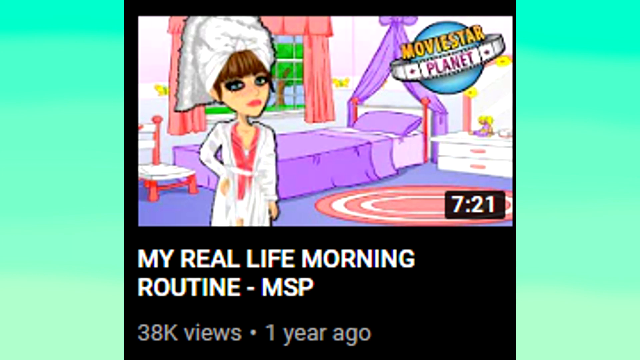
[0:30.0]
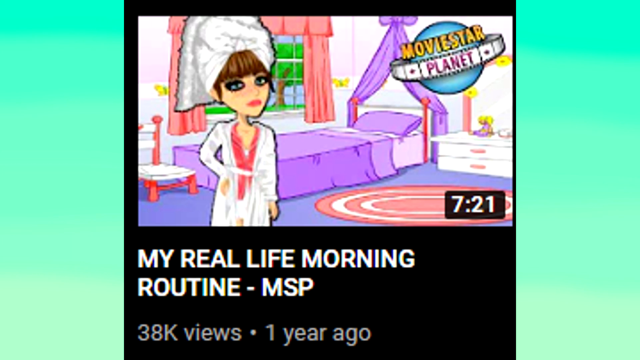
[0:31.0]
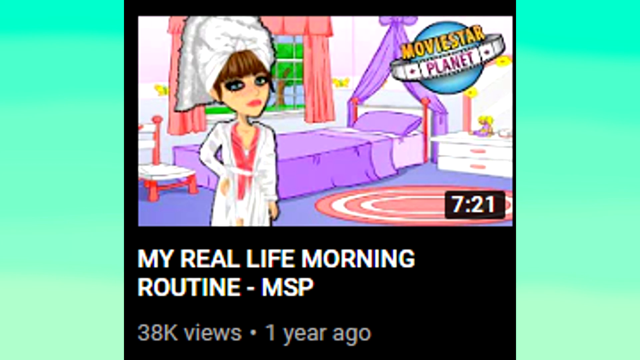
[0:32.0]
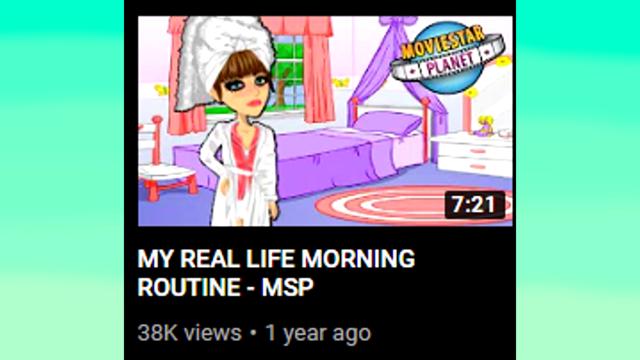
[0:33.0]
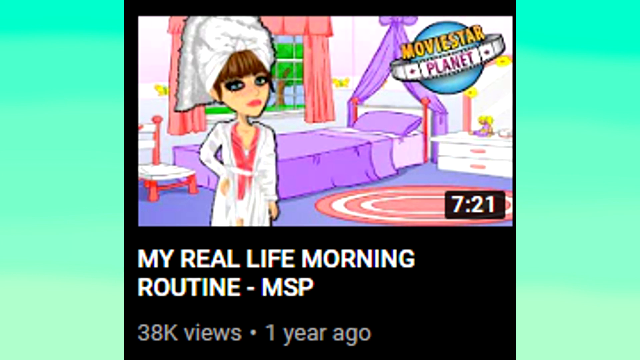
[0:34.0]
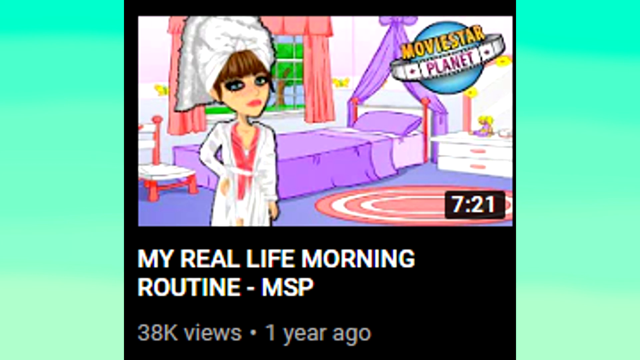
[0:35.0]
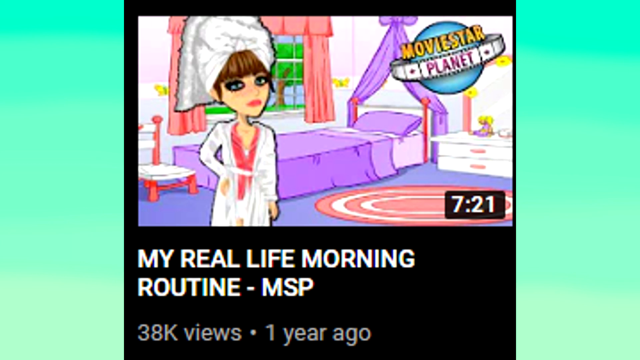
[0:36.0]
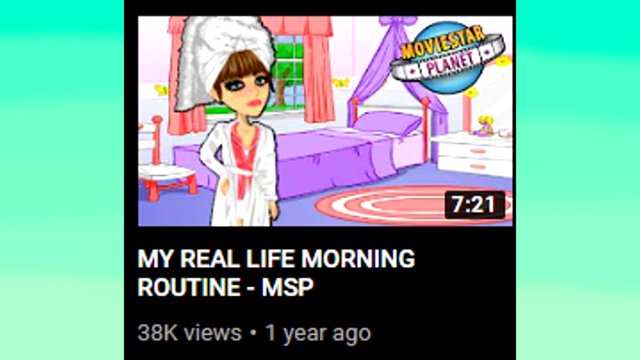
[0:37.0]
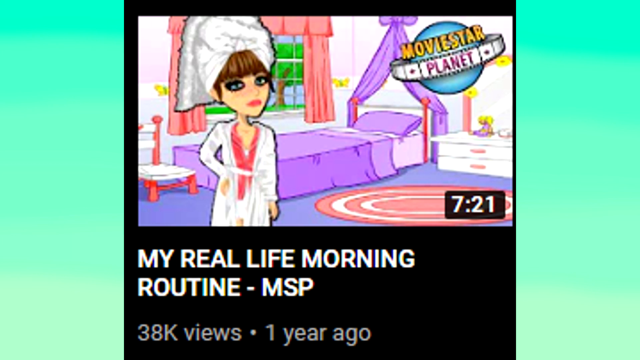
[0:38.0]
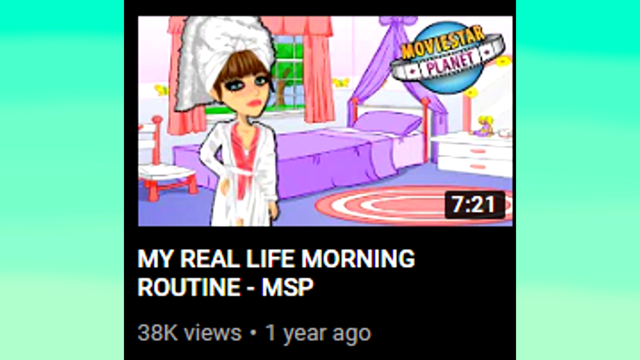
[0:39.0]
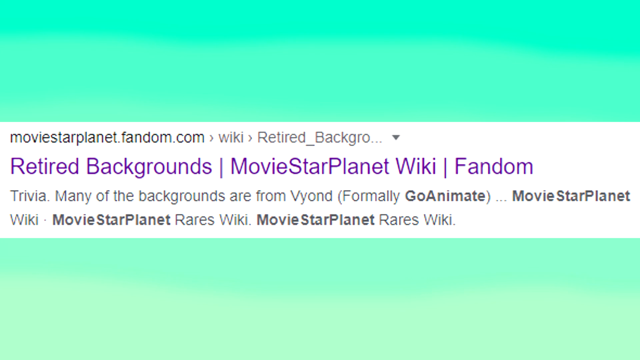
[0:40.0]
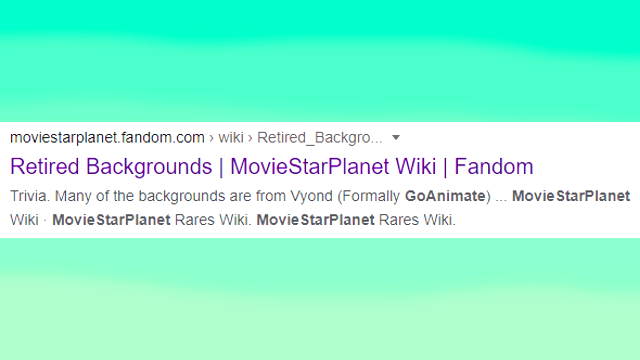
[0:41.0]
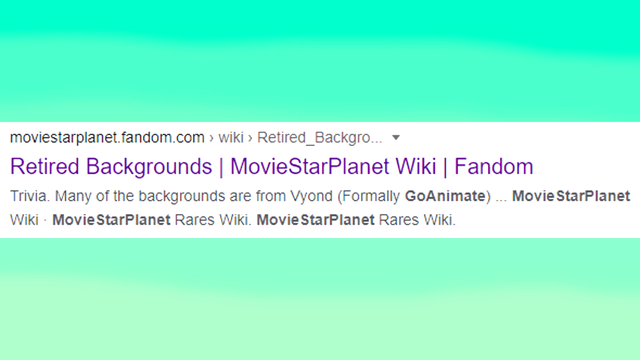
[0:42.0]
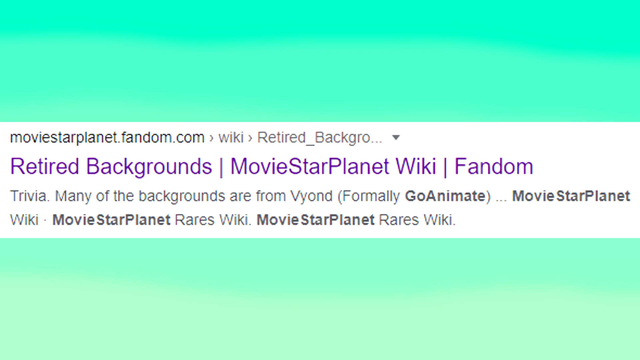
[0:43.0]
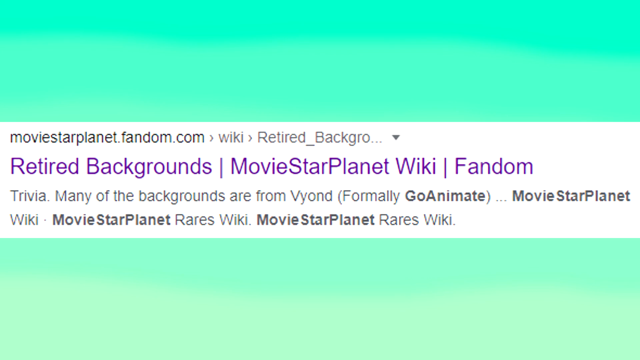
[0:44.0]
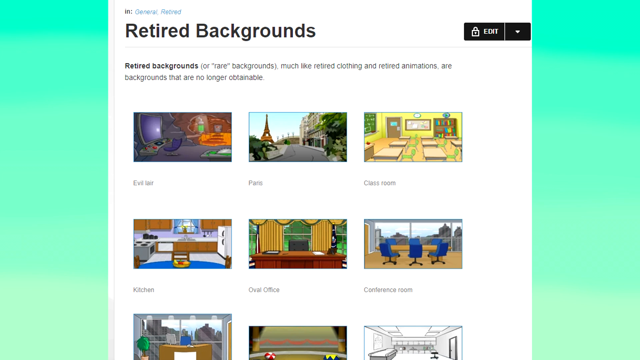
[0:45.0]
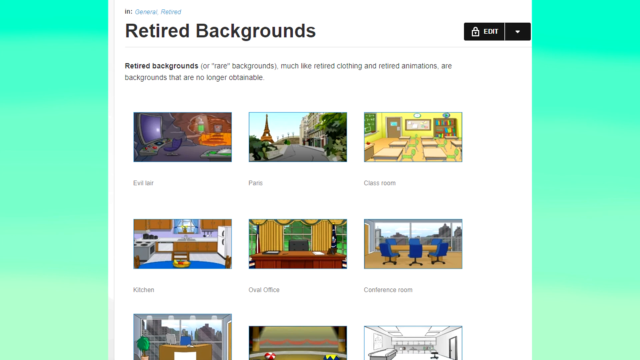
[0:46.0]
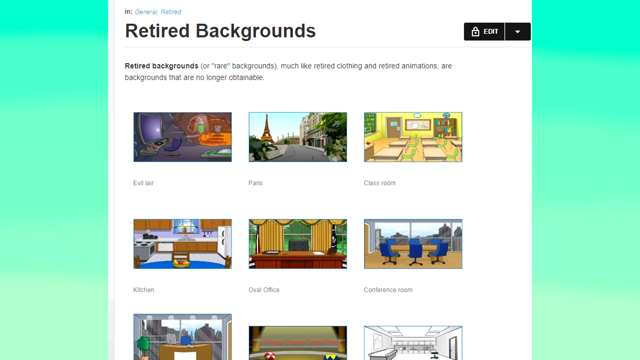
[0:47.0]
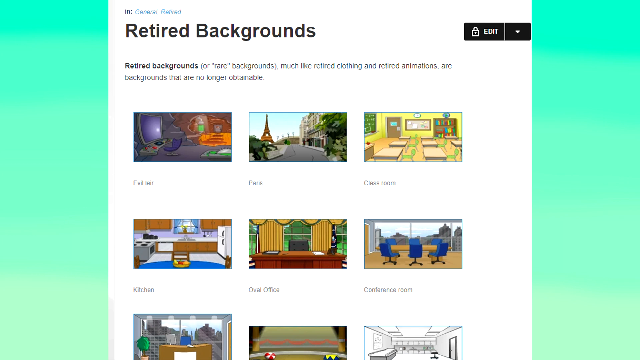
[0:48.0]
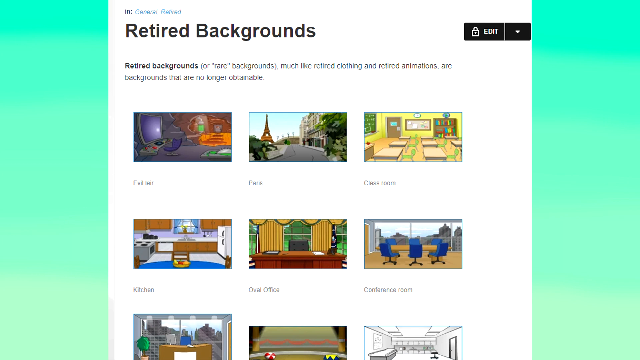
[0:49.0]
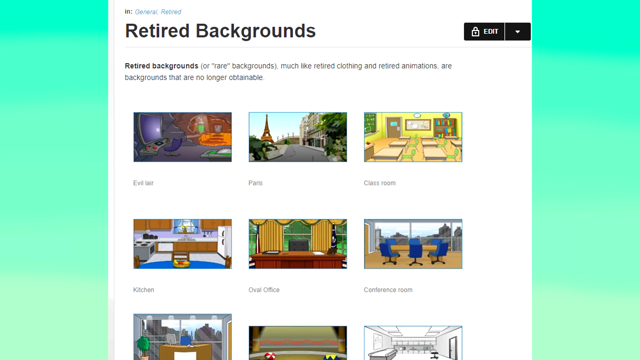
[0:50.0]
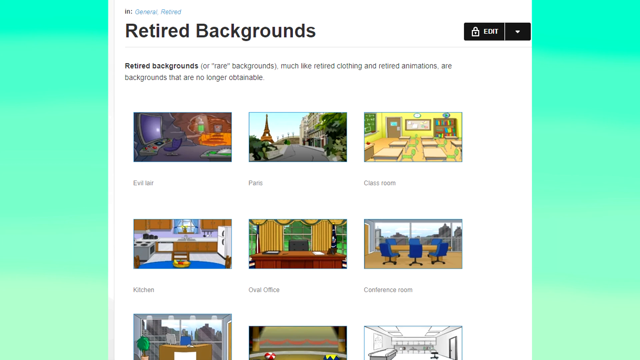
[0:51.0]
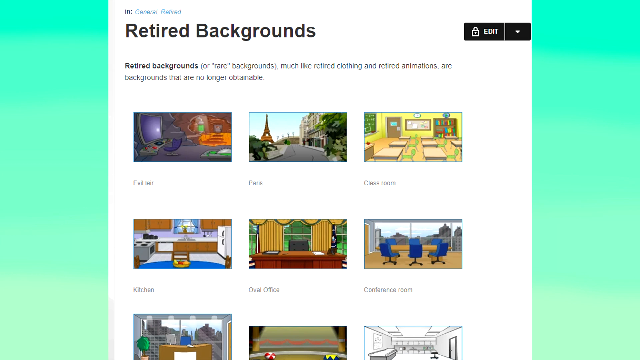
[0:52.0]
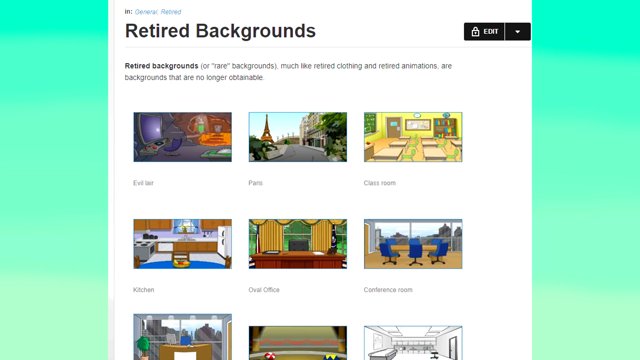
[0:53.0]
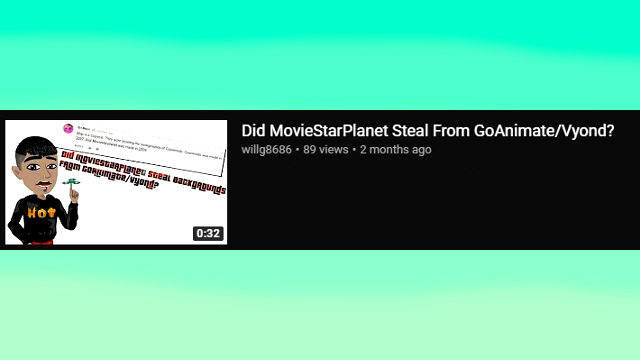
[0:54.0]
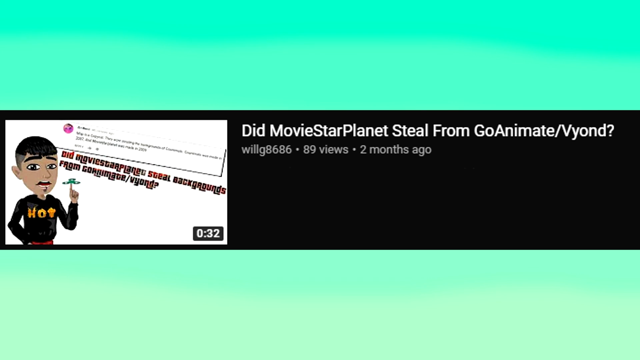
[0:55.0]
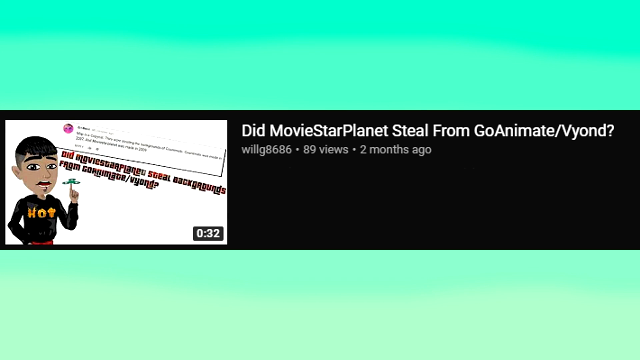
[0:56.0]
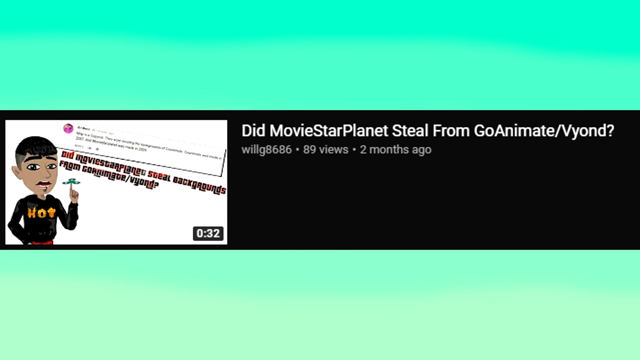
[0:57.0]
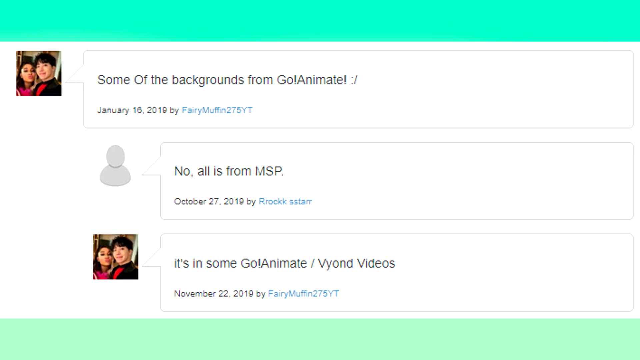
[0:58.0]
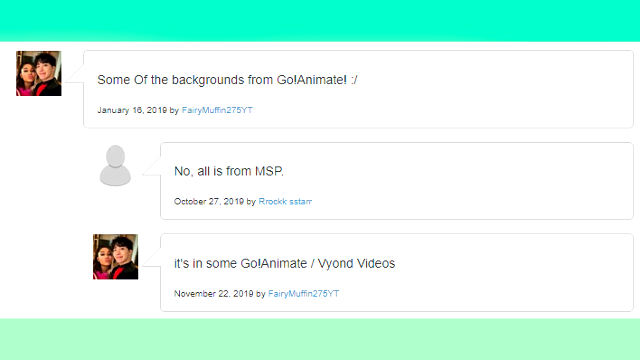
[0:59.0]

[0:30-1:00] The video's details read "36,000 views" and show it was posted one year ago. The scene cuts to something like a Google search on a very bright green background, reading "moviestarplanet.fandom.com found in wiki, found in retired background" and "retired backgrounds / moviestarplanet wiki / fandom" in a sort of purple writing. Underneath, on a white banner across the green background, it says "trivia. Many of the backgrounds are from Vyond, formerly GoAnimate." along with "Moviestarplanet wiki" and "moviestarplanetres wiki". Next is an image of retired backgrounds with the description "retired backgrounds or rare backgrounds, much like retired clothing and retired animations are backgrounds that are no longer obtainable". Several background images are shown but are hard to see: Paris, roughly in the middle of the top row, possibly Evil Lair, classroom, kitchen, Oval Office and conference room, with more underneath of which only the tops are visible. A thumbnail for another video follows, titled "Did MovieStarPlanet steal from GoAnimate?", posted by WillG8686 two months ago with 89 views. The thumbnail repeats "Did MovieStarPlanet steal backgrounds from GoAnimate?" and shows a man with a moustache in a black long-sleeved top, plus a Twitter post placed into it; that video is 32 seconds long. Then come what seem to be Twitter comments, possibly from the fandom page. One, with a profile image of a man and a woman, says "some of the backgrounds from Go!Animate!", dated January 16th, 2019, by FairyMuffin275YT. A reply from a user with no profile picture says "know all this from MSP", dated October 27th, 2019. The original poster's profile picture appears again with "it's in some Go!Animate! videos", dated November 22nd, 2019, by FairyMuffin275YT, showing a conversation between the two.